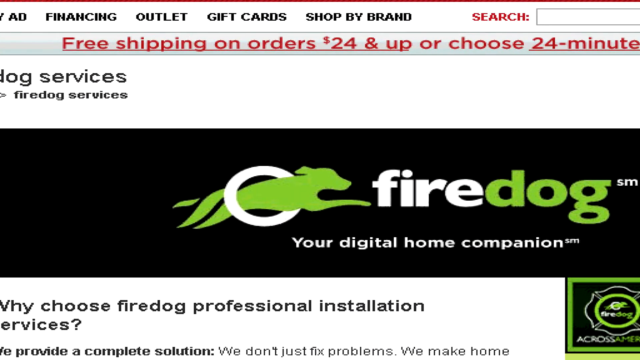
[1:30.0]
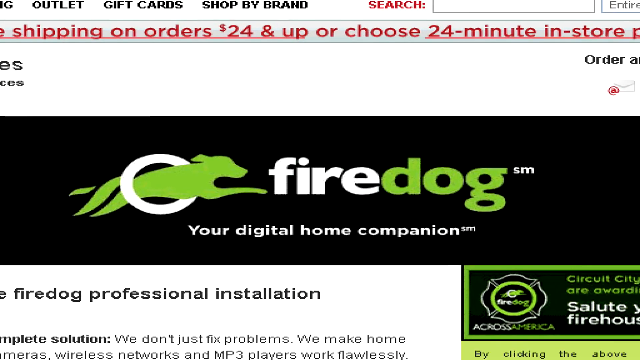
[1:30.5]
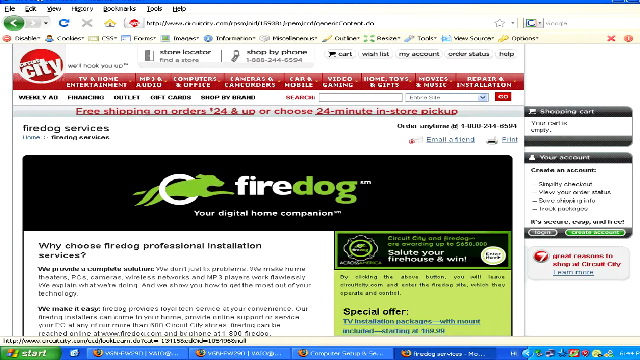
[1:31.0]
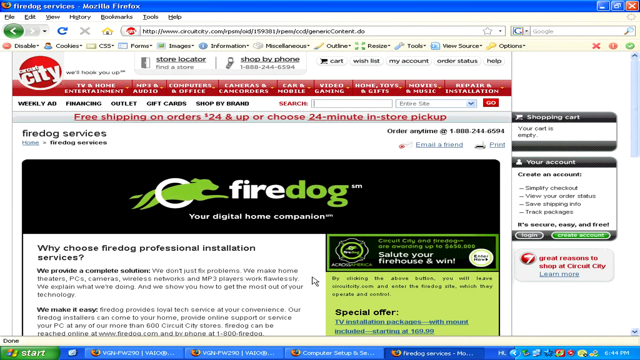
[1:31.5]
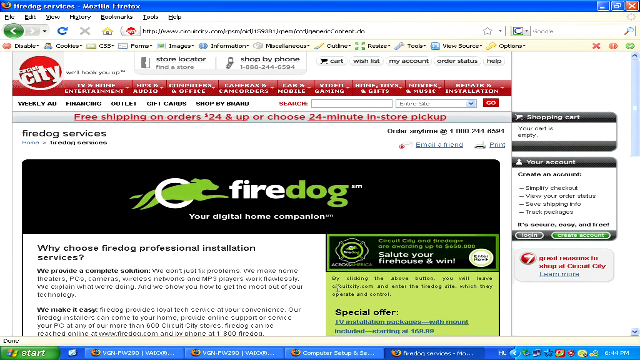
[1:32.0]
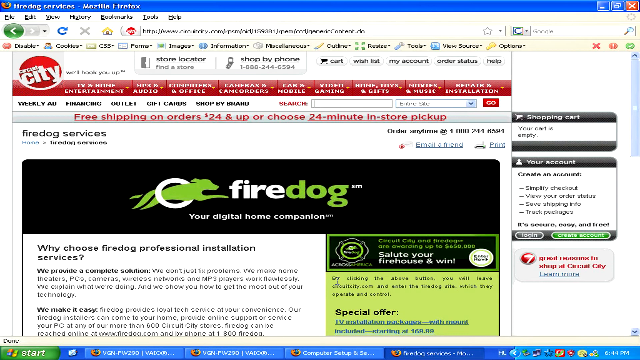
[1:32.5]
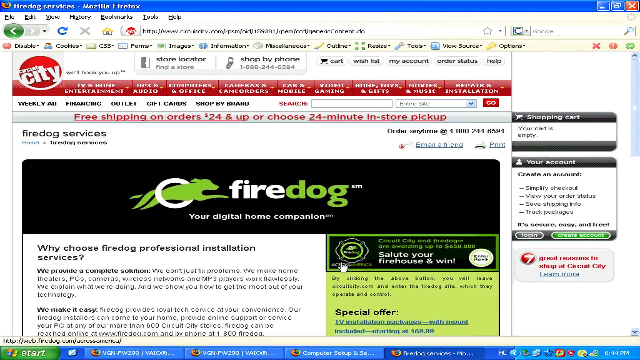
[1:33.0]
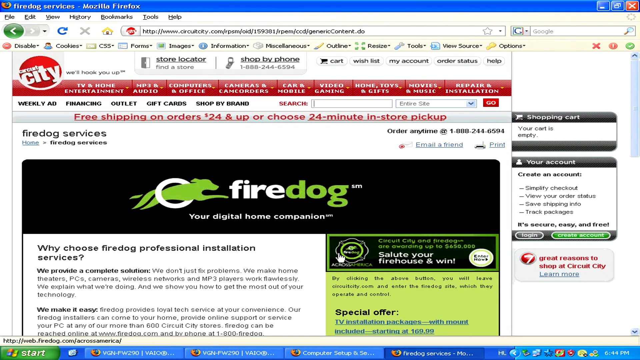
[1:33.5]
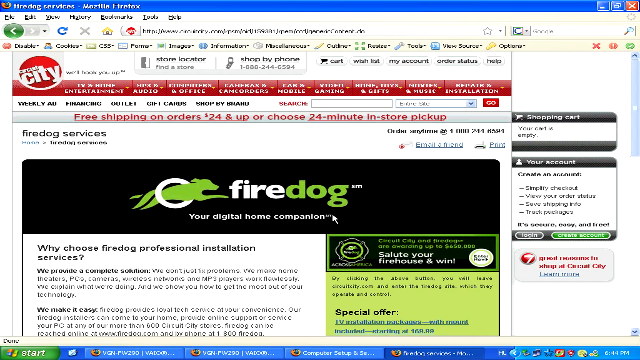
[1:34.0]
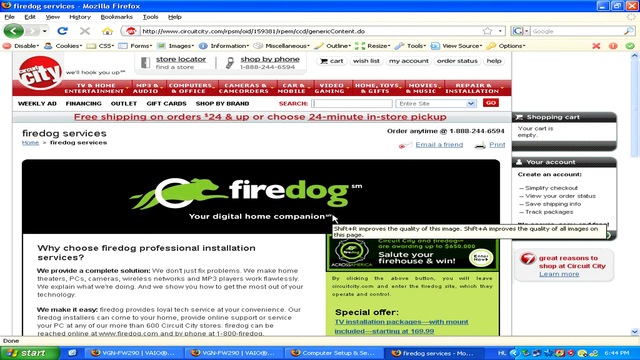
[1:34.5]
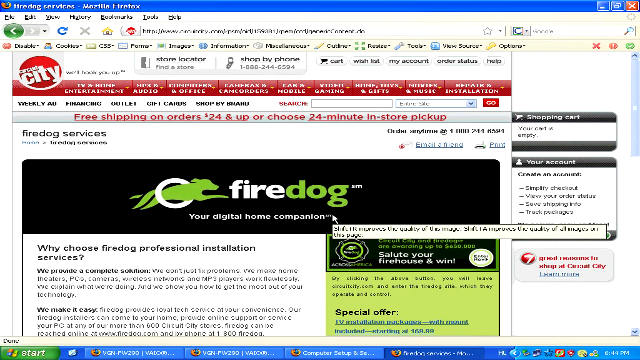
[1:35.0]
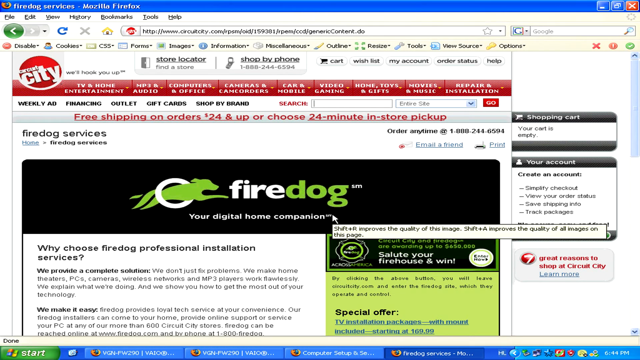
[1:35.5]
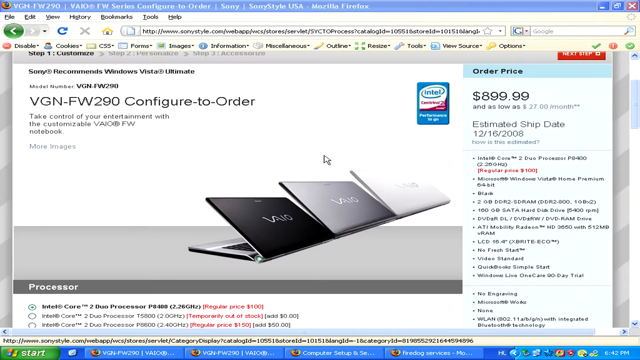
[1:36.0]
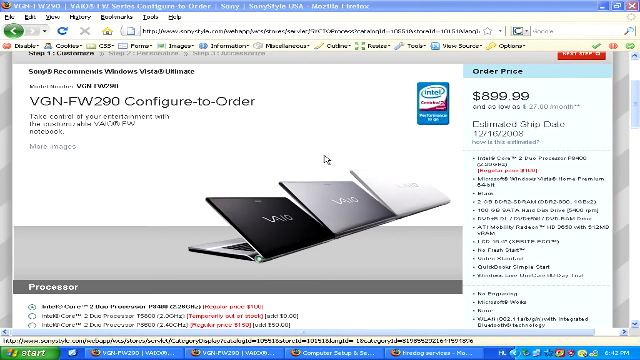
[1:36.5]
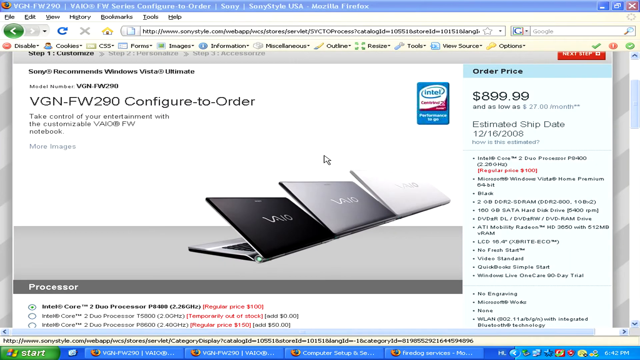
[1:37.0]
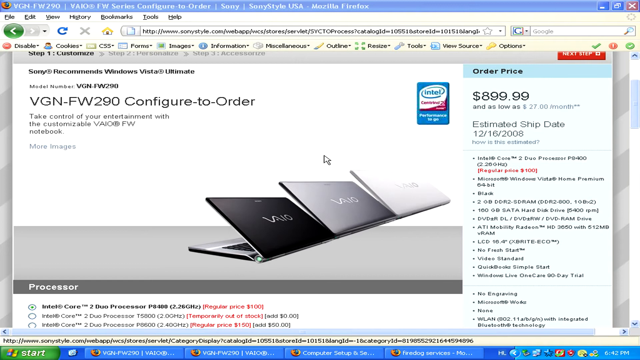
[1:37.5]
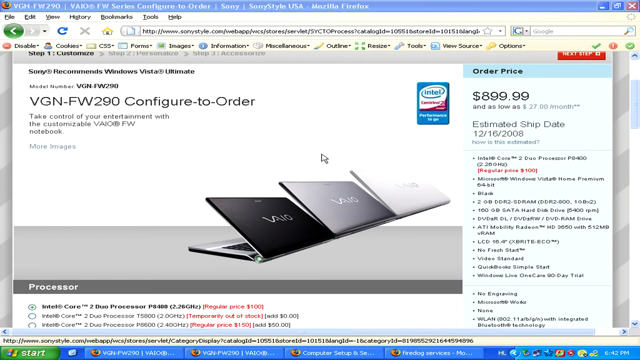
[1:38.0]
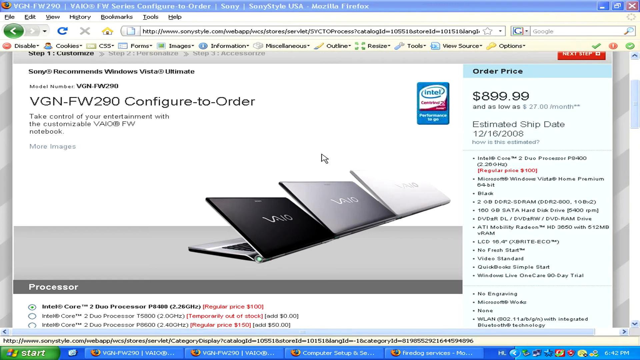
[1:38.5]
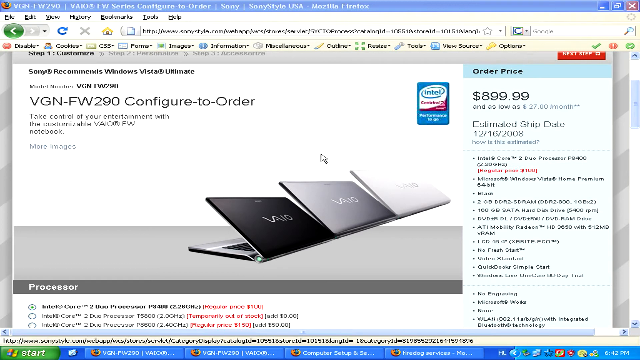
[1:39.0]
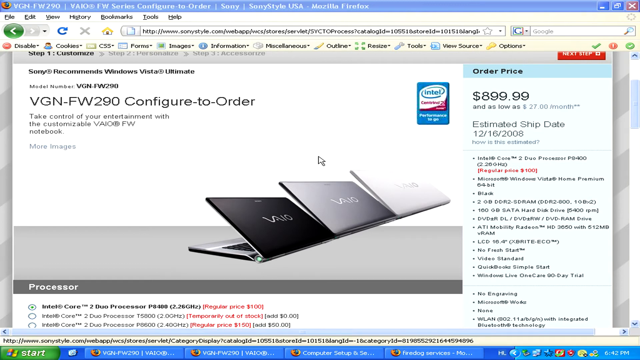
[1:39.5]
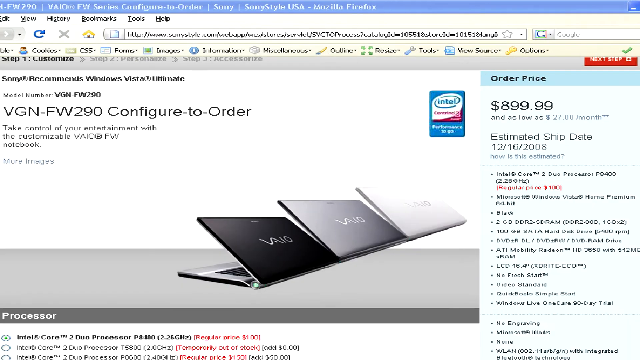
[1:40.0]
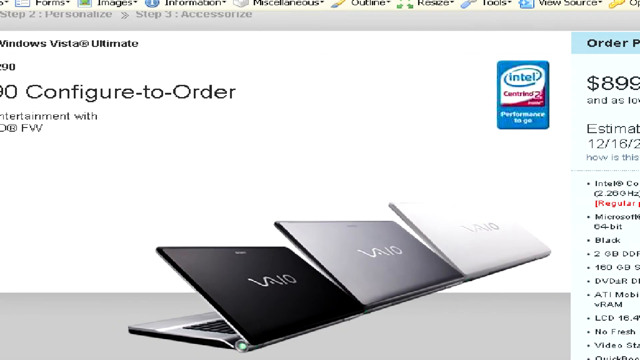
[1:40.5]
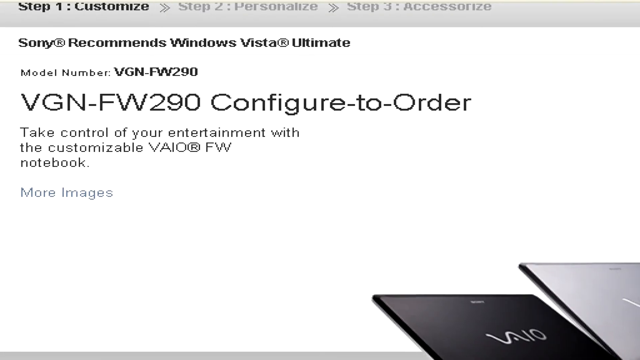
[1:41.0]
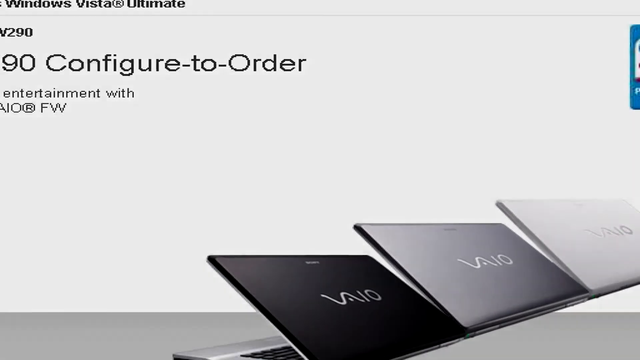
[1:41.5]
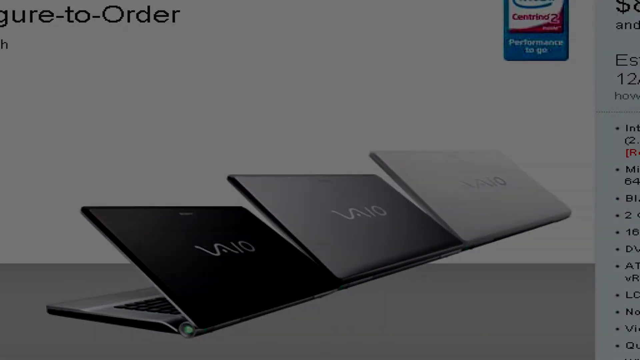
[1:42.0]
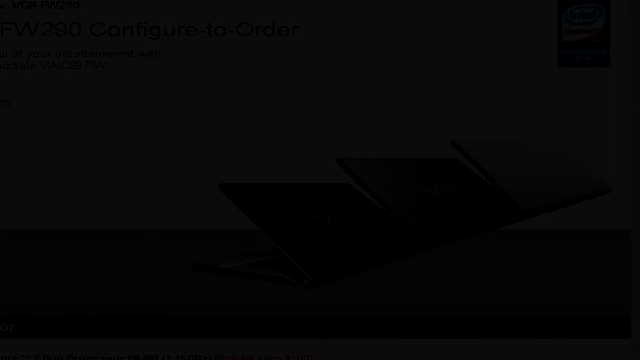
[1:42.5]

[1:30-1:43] A FireDog website, "your digital home companion", is shown very zoomed in, with text saying "why should you choose FireDog professional installation services? We provide a complete solution. We don't just fix problems. We make home theaters, PCs, cameras, wireless networks, and MP3 players work flawlessly. We explain what we're doing, and we show you how to get the most out of your technology. We make it easy. FireDog provides loyal tech service at your convenience. Our FireDog installers can come to your home, provide online support, or service your PC at any of our more than 600 Circuit City stores. FireDog can be reached online at FireDog.com and by phone at 1-800-FIRE-DOG." A section says "salute your firehouse and win", with some special offers. At the top of the page are the Circuit City logo and categories such as TV and home entertainment, MP3 and audio, computers and office, camcorders and cameras, car and mobile, video gaming, homes, toys and gifts, movies and music, and repair and installation, with a title saying "free shipping on orders $24 and up, or choose 24-minute in-store pickup". The man browses over parts of the screen, then goes back to a screen that says "VGNFW290, configure to order" under Laptops, with an order price of $899 or as low as $27 a month. The specifications on the right side include video standard and no engraving, and the estimated ship date is 12-16-2008. The selected processor reads Intel Core 2 dual processor P8-400, with a regular price of $100 additional. The video then fades out to a dark black background.